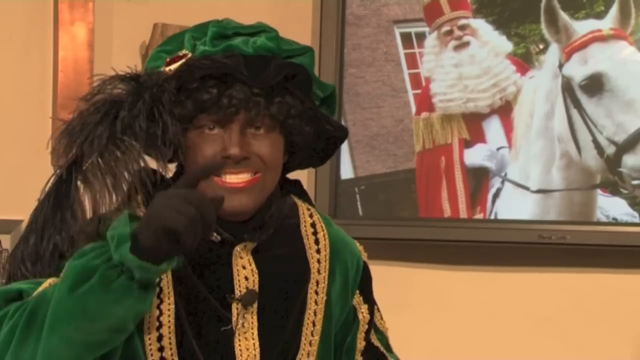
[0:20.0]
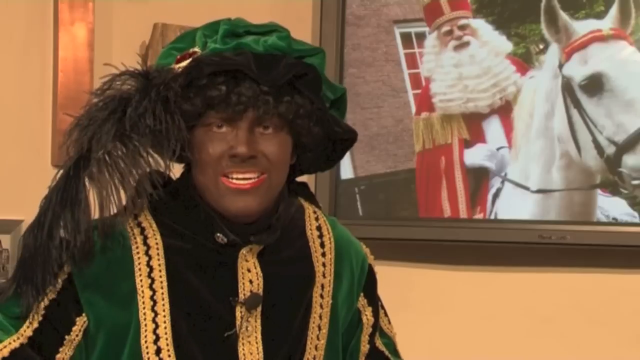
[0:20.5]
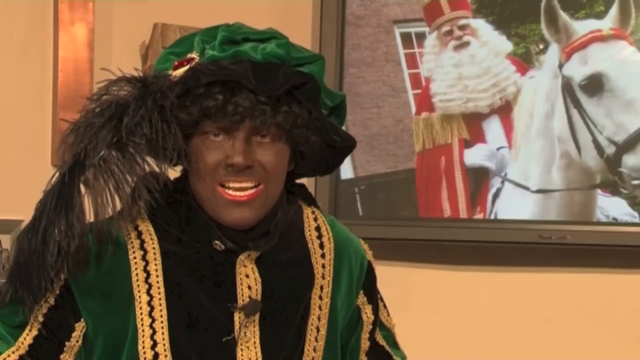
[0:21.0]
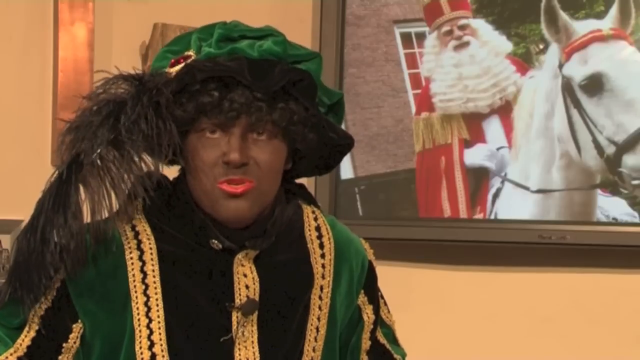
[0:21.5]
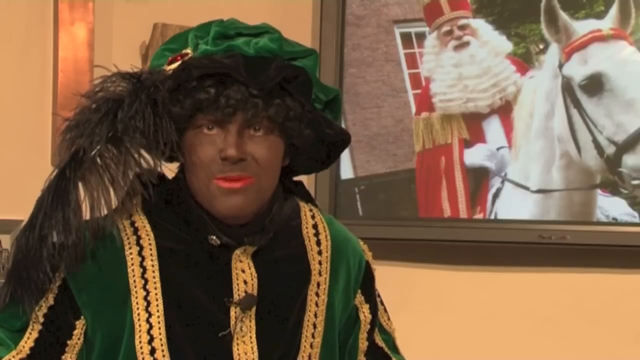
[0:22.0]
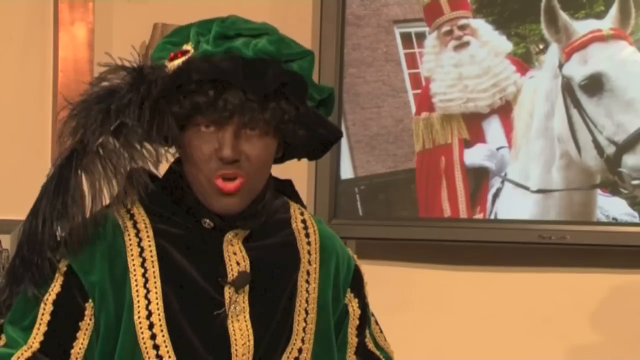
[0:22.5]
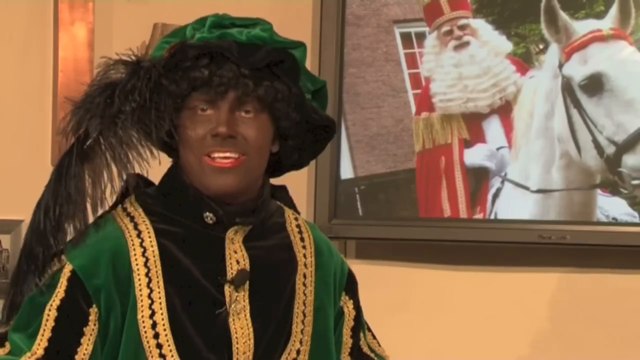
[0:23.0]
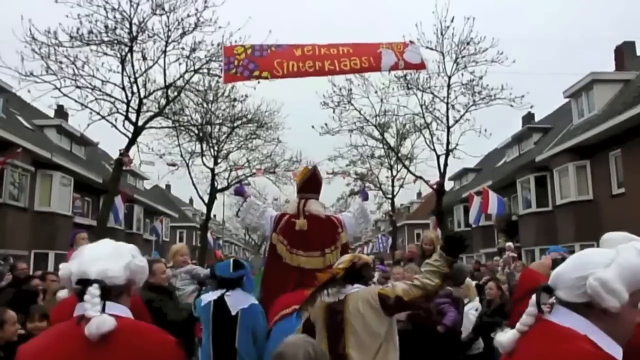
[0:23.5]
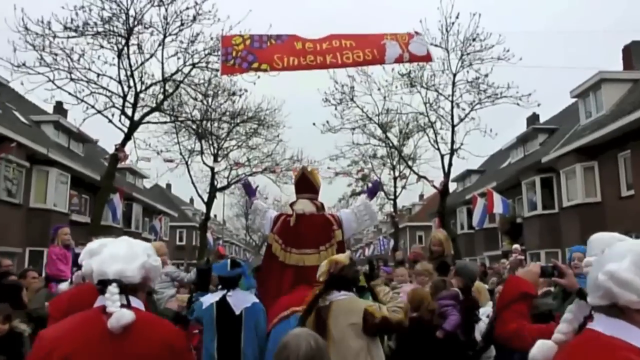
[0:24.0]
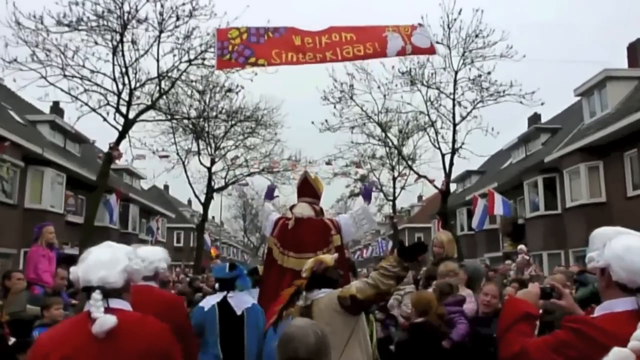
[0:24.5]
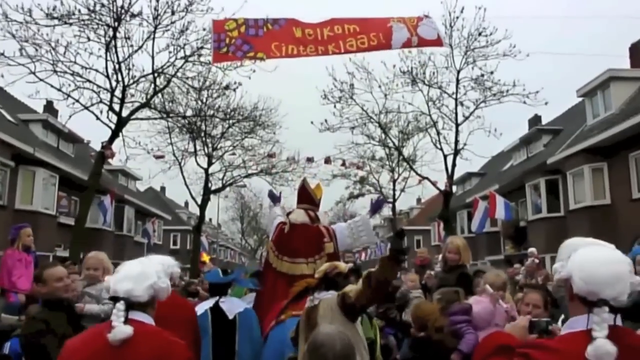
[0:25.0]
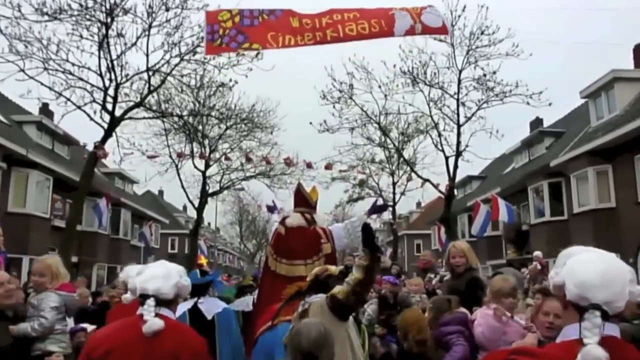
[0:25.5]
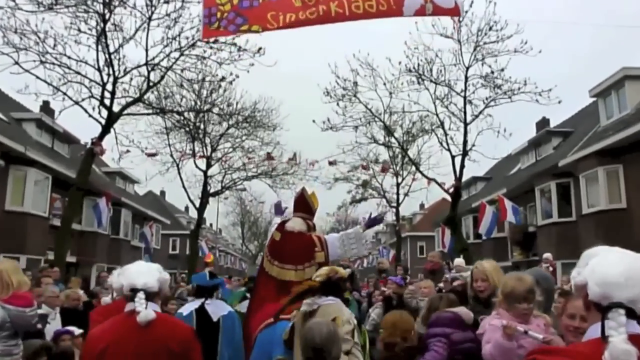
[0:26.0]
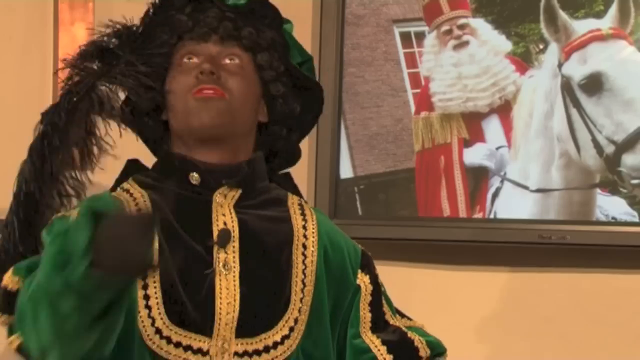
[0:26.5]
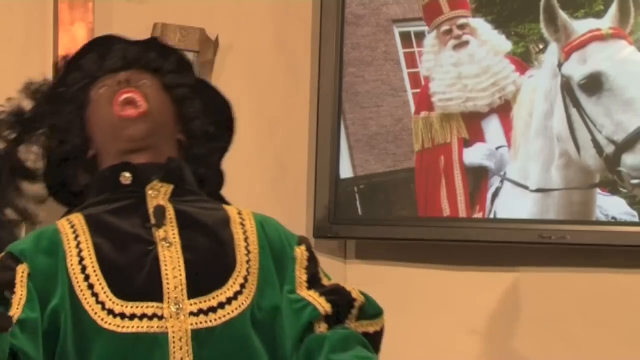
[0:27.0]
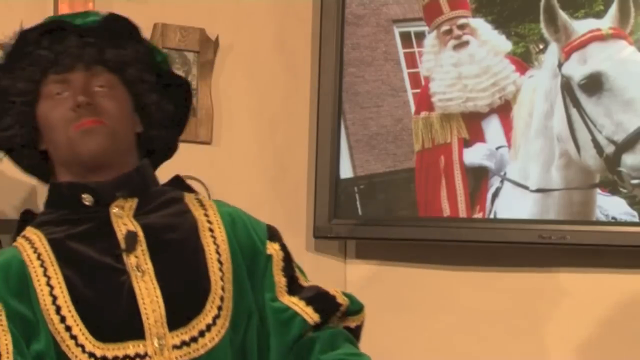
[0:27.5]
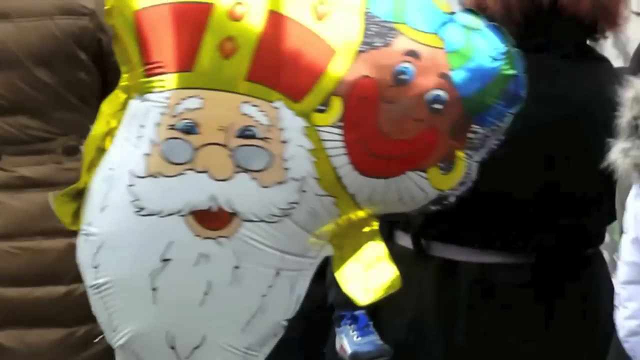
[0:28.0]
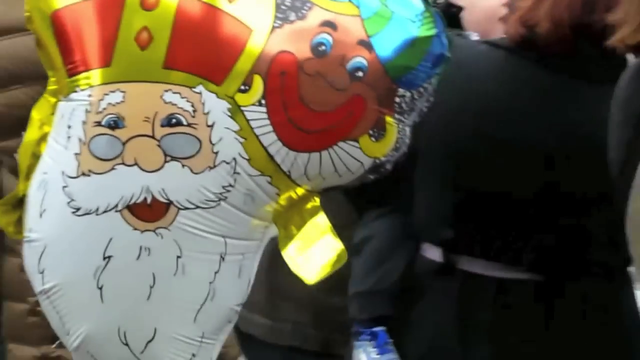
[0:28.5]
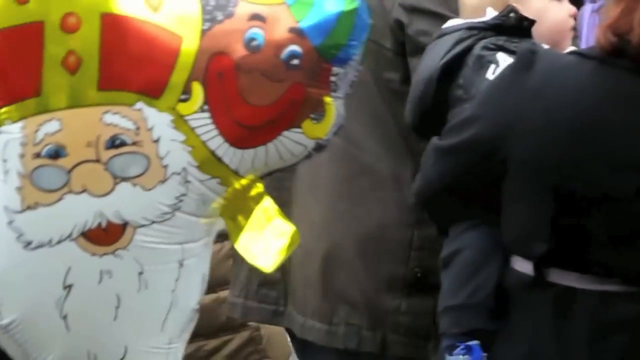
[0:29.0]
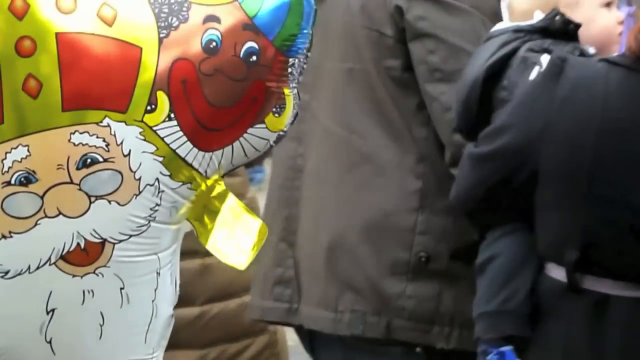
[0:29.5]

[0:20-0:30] The shot is zoomed in on a Black individual on the left side of the frame wearing a medieval-style costume: a green shirt with a black chest, with the seam between the two and the buttons down the center all in gold. They wear a green hat with a black underside and a big black feather coming off their right side, which is the left side of the screen. They face the camera and talk, and a TV mounted on the wall behind them shows what looks like Santa riding a white horse. The image then cuts to a parade, filmed from a perspective within the parade; it looks like the camera is behind Santa Claus, with several other heads below him and crowds off to the left and right. Next comes a screen with floating balloons: one is Santa, and another is the smiling face of a Black individual with big red lips.